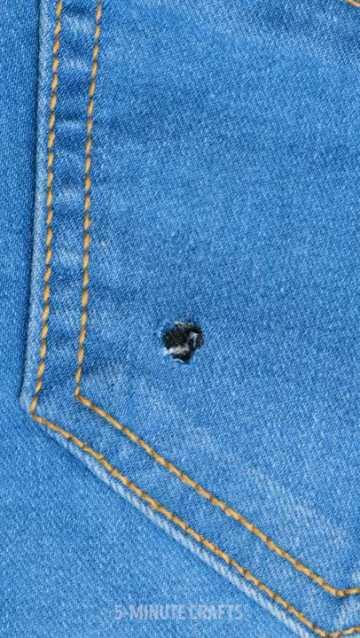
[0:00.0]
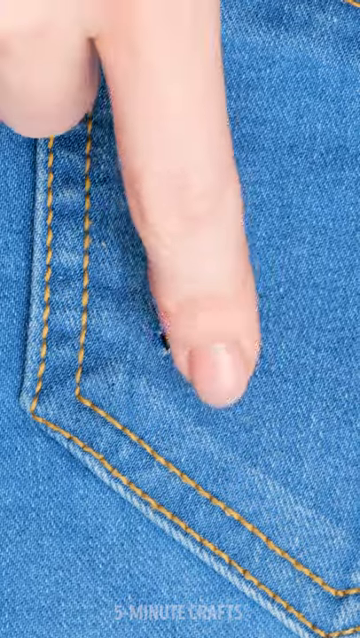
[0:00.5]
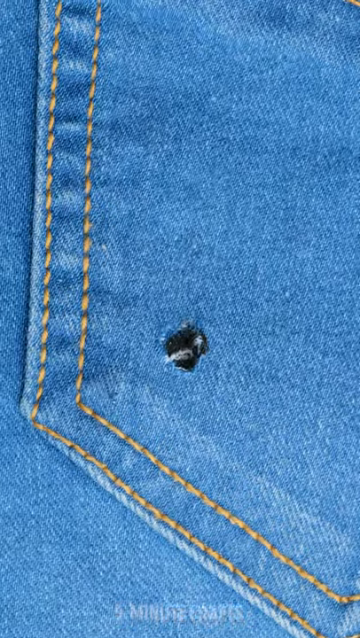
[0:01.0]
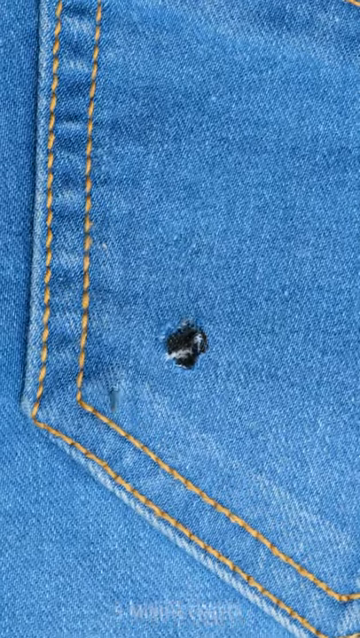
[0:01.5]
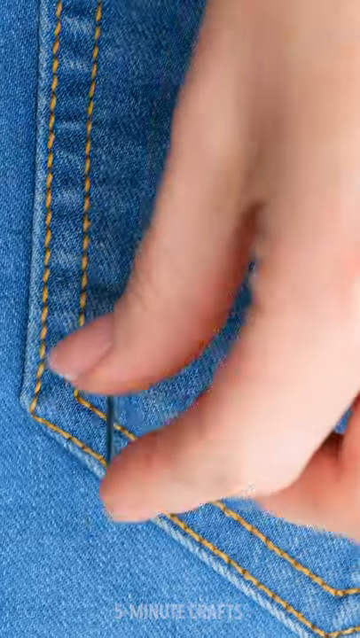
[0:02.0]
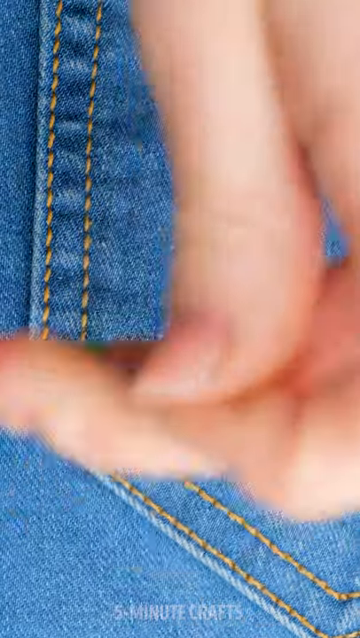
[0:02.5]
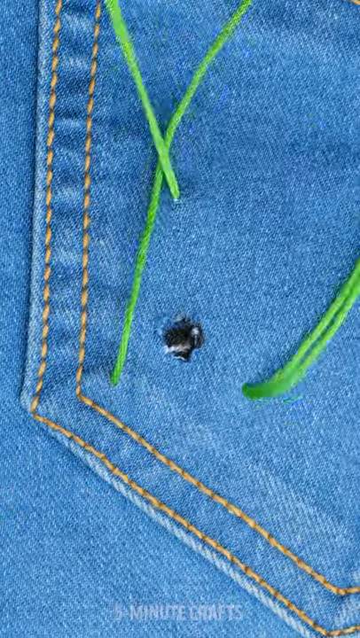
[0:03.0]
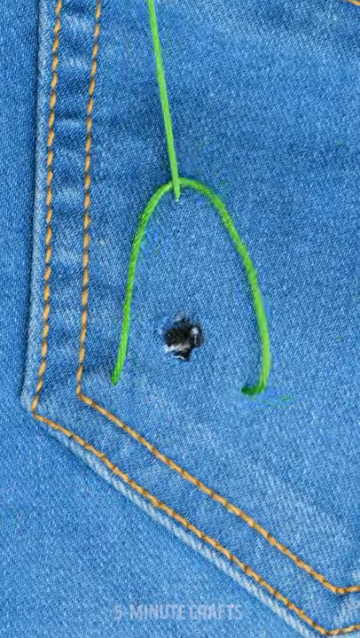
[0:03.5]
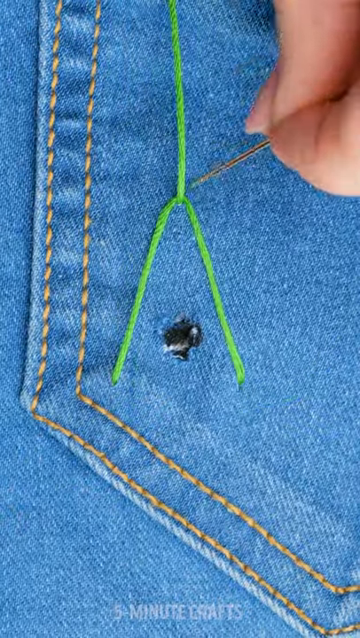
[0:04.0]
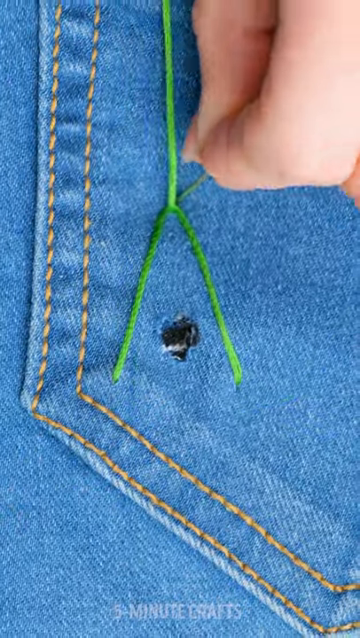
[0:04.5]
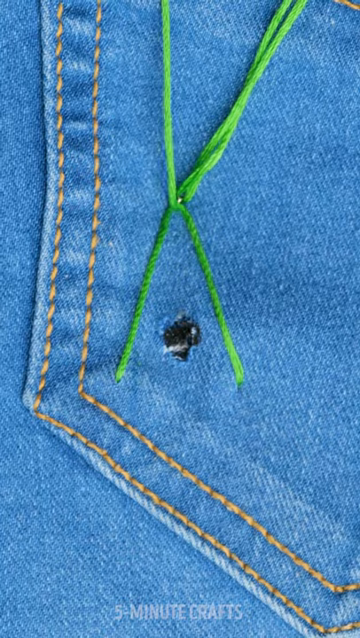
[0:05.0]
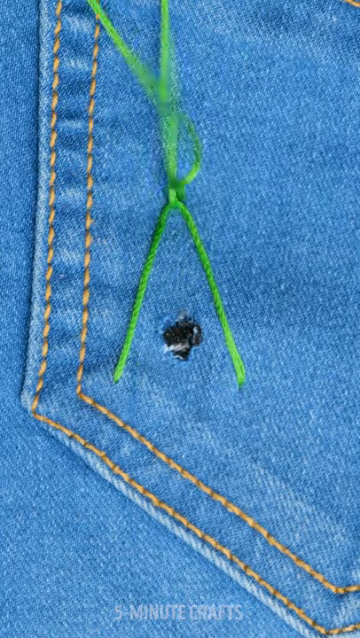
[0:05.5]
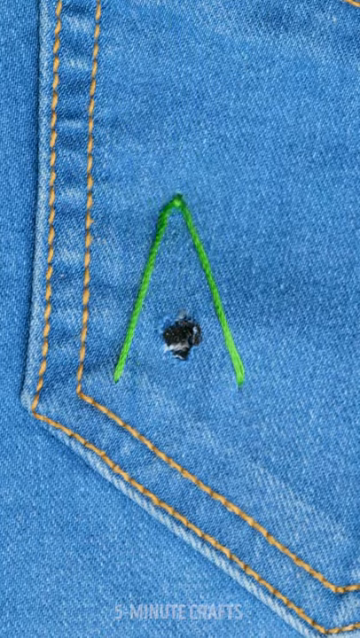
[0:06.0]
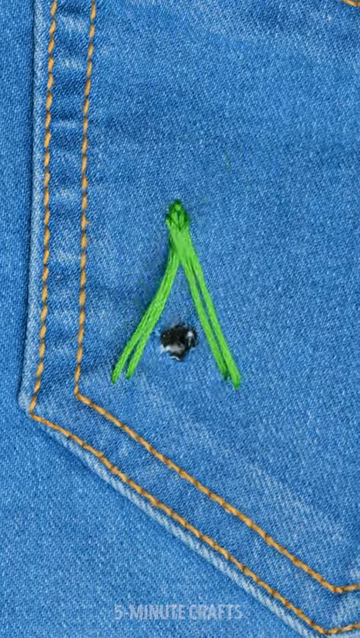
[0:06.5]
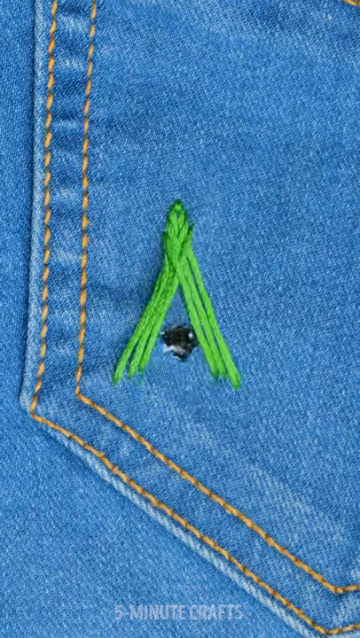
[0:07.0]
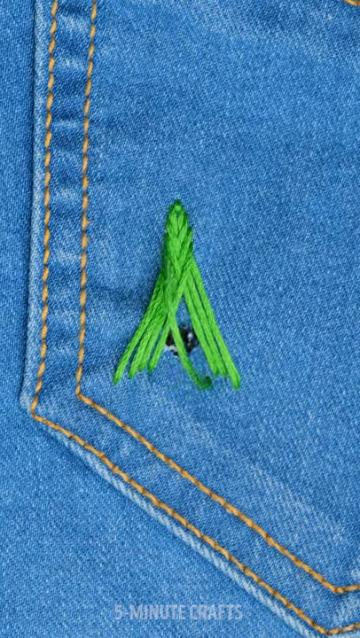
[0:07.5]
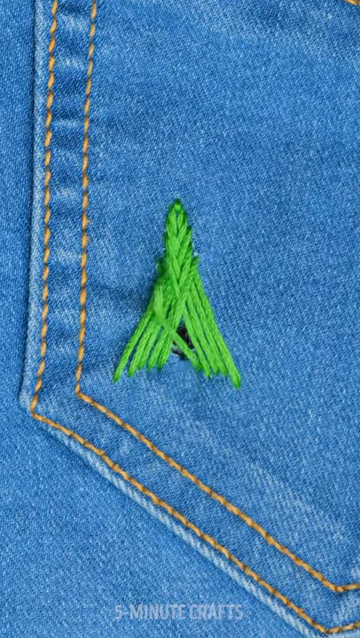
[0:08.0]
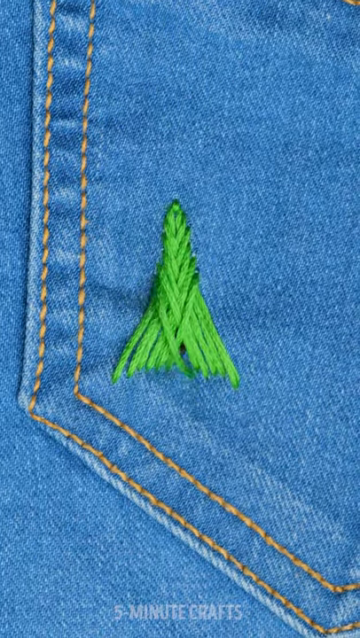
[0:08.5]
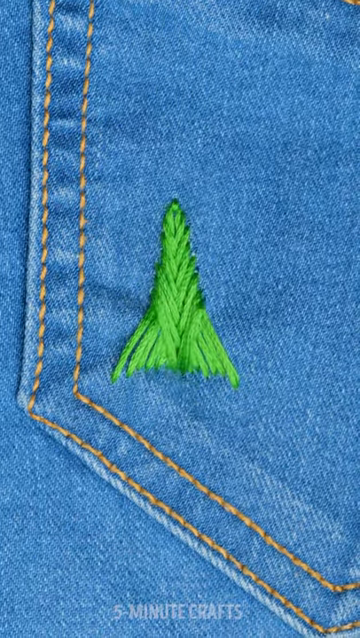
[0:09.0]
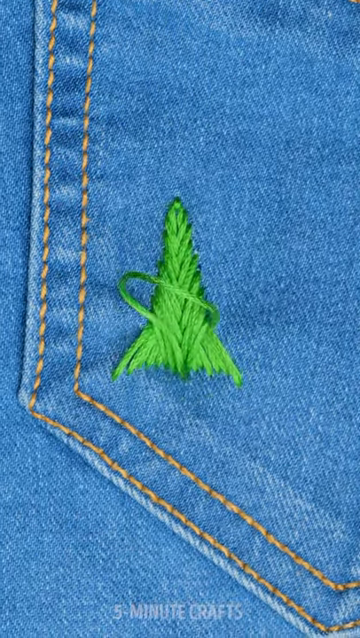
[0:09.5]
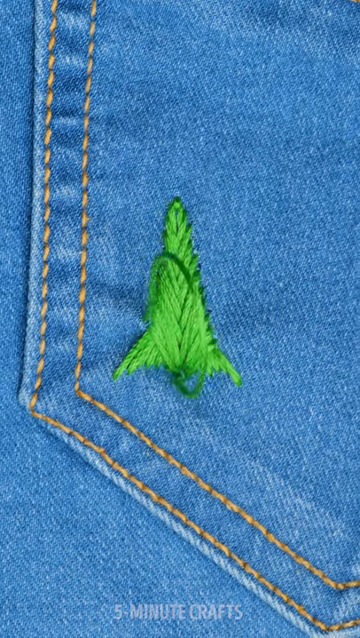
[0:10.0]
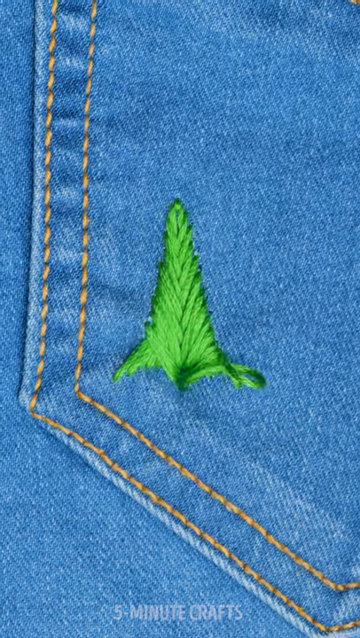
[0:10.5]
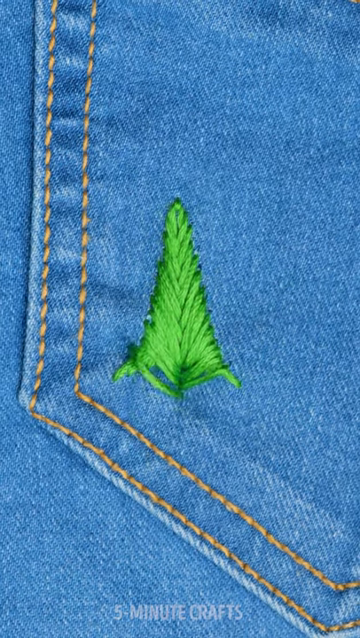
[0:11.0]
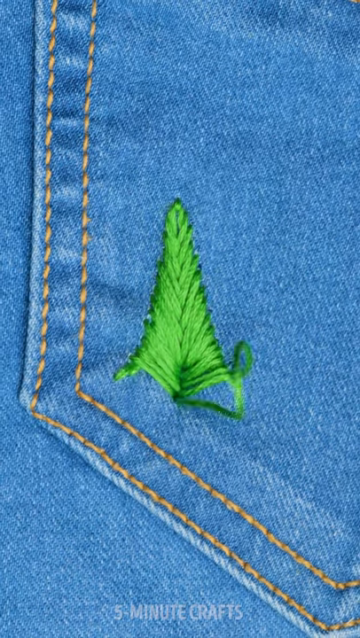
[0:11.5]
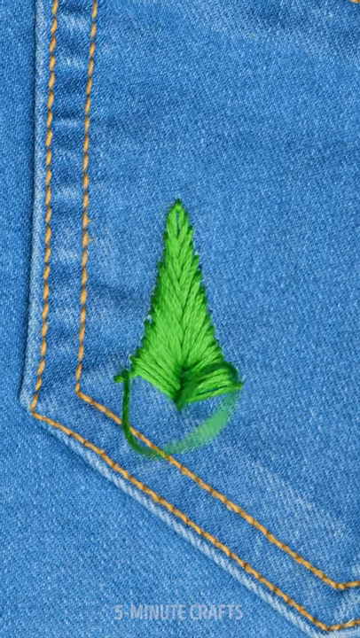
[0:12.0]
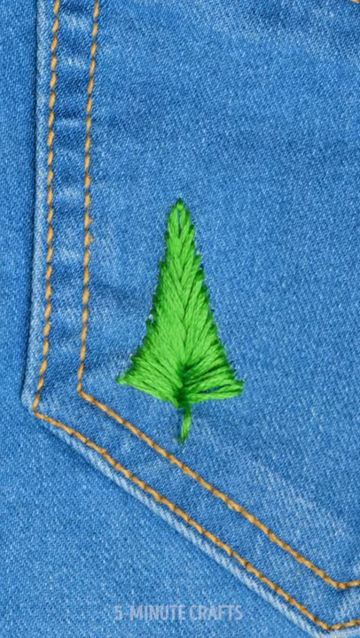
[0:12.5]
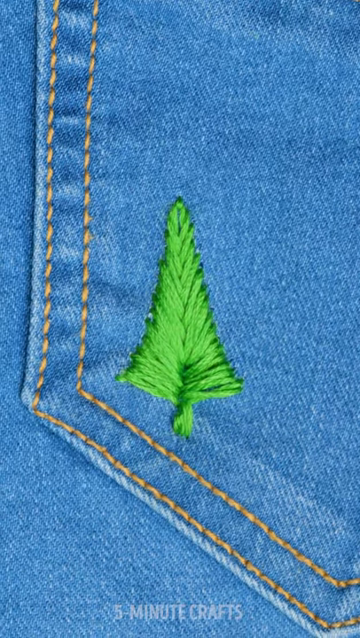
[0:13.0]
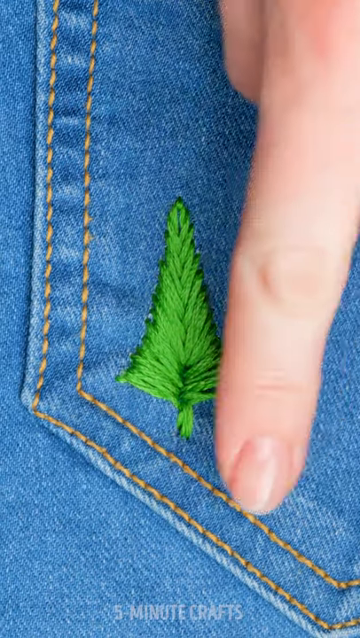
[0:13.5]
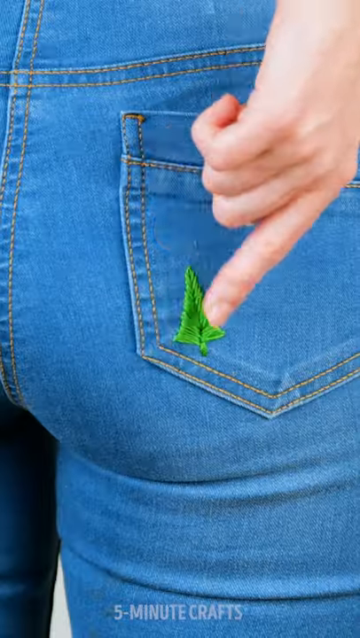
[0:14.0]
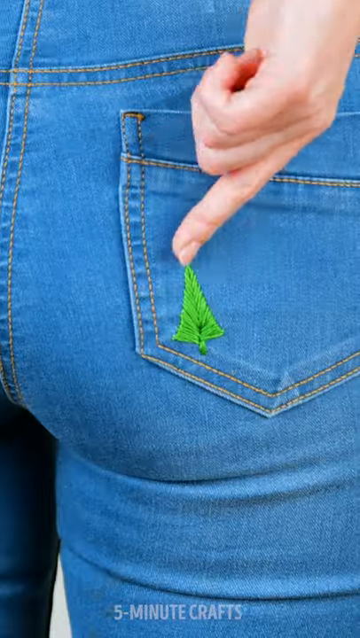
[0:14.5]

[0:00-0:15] The video opens on the back pocket of a pair of jeans, where it looks like a screw or some black piece of metal has poked through the pocket area. The person filming takes medium green embroidery thread and starts making a pattern over the hole. The pattern is kind of triangular, with the left strand going over the right strand and the right strand going over the left, so it looks kind of like a fishtail braid over the hole. Then the person is shown wearing the jeans, with the green stitching on the back pocket almost looking like an arrow or skinny triangle shape, with a little part at the bottom; it almost looks like a little tree.